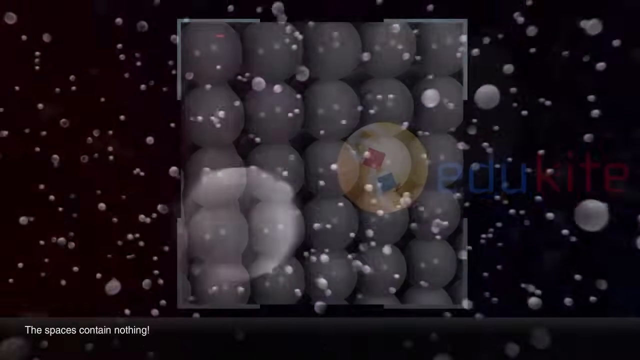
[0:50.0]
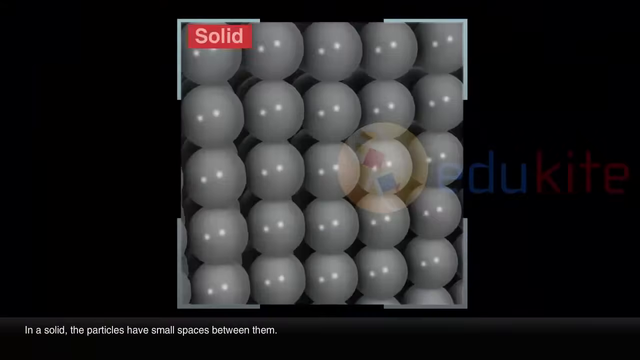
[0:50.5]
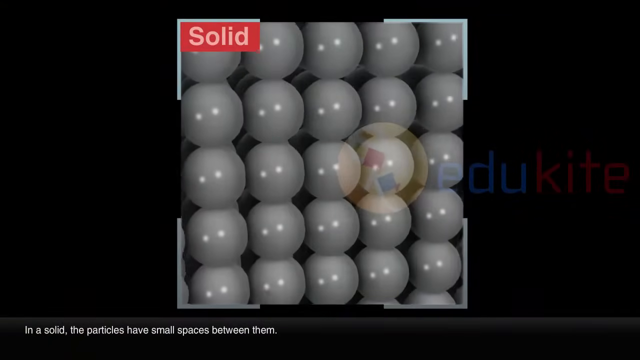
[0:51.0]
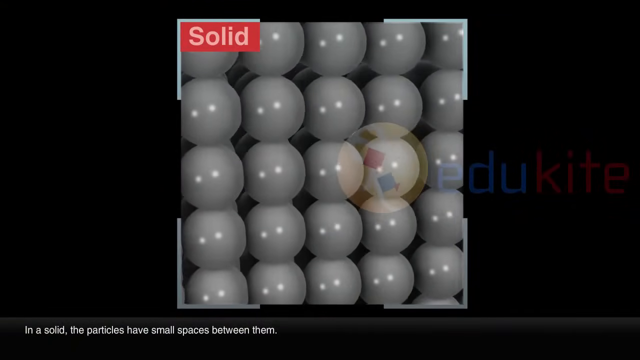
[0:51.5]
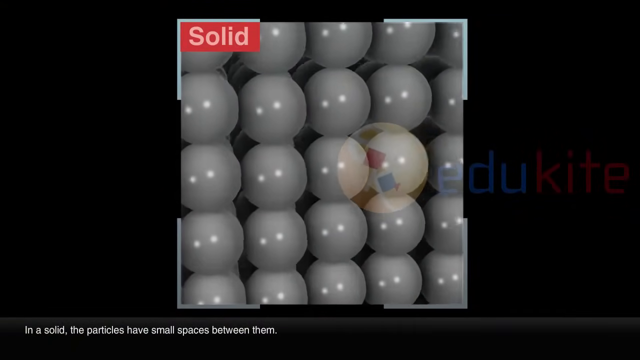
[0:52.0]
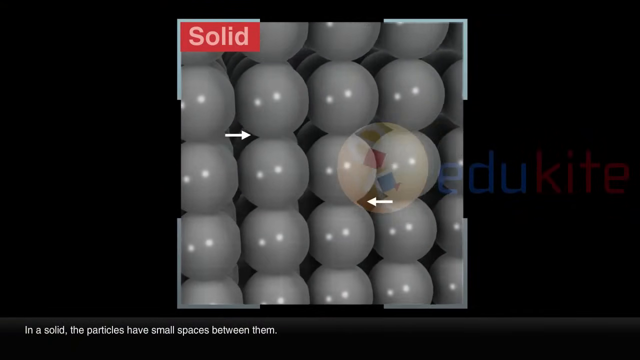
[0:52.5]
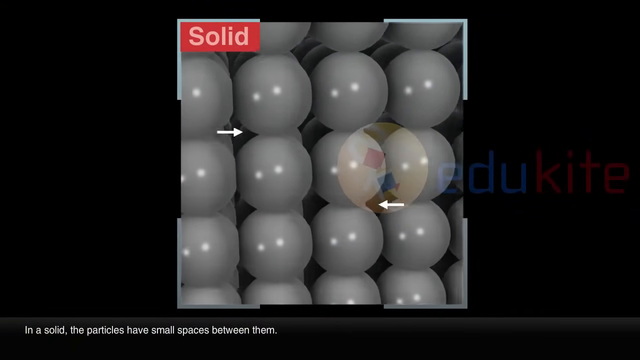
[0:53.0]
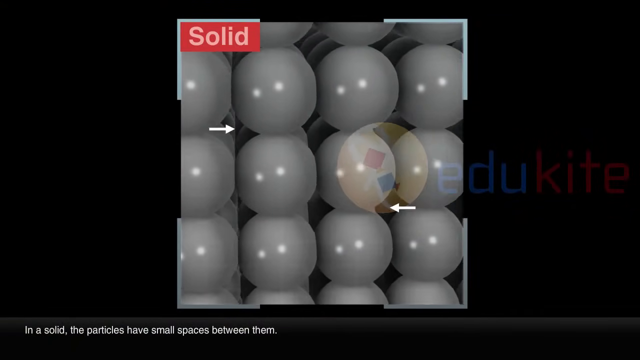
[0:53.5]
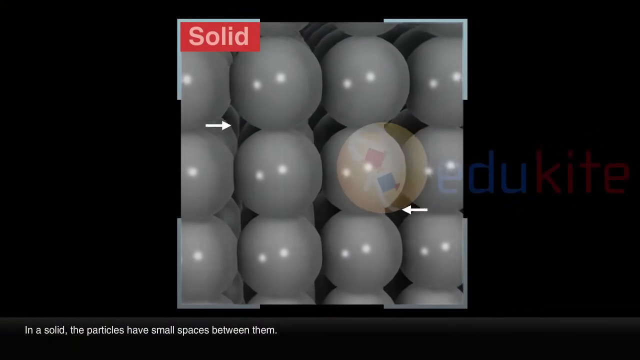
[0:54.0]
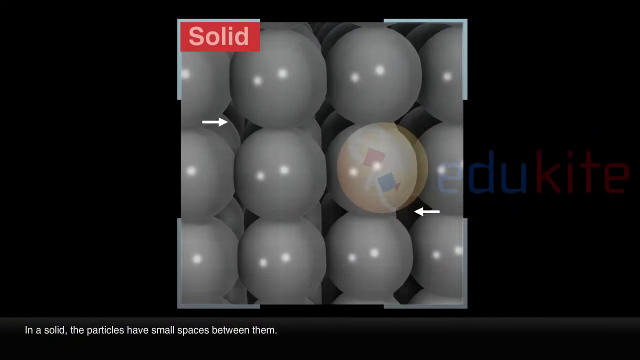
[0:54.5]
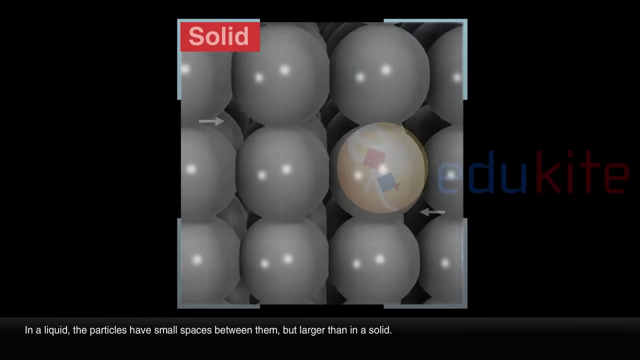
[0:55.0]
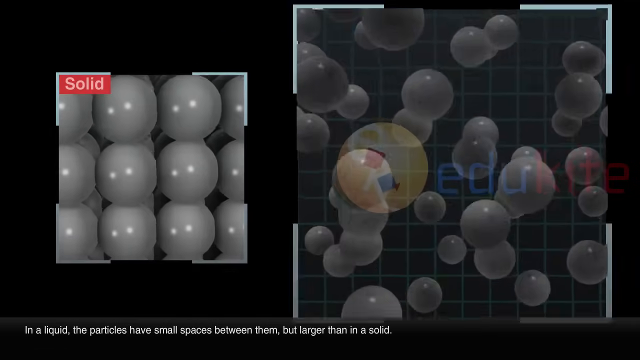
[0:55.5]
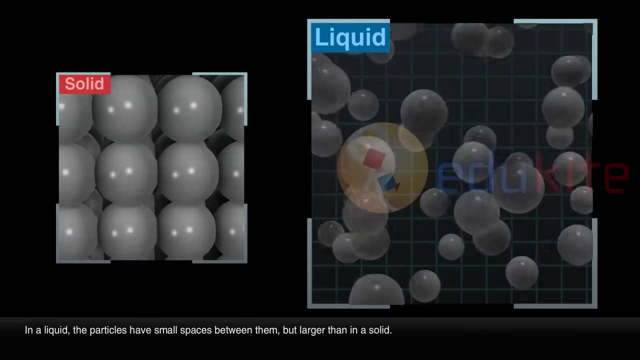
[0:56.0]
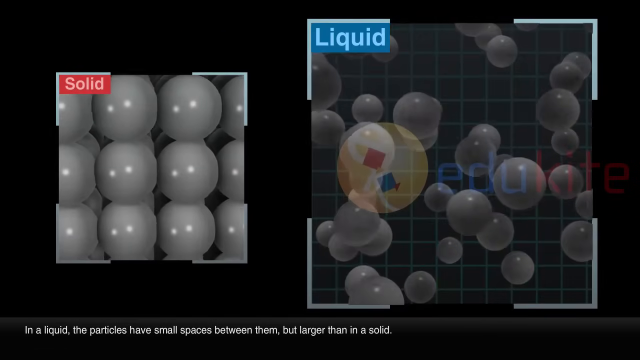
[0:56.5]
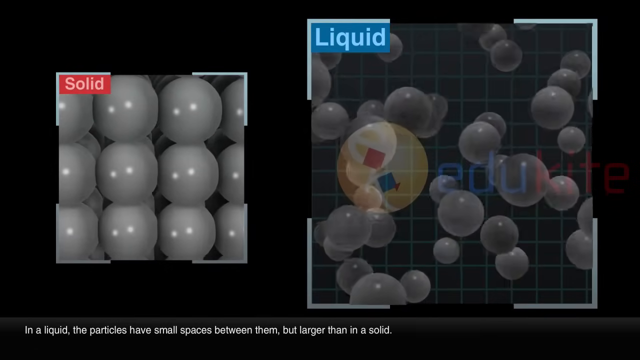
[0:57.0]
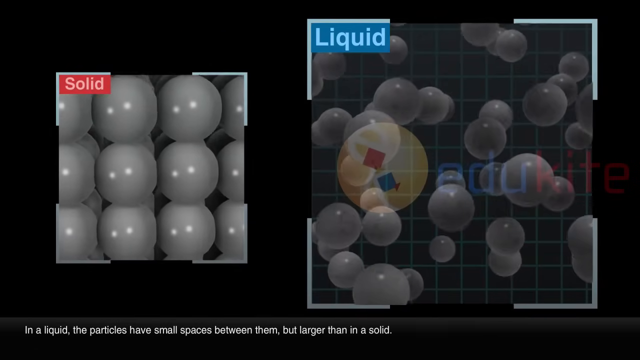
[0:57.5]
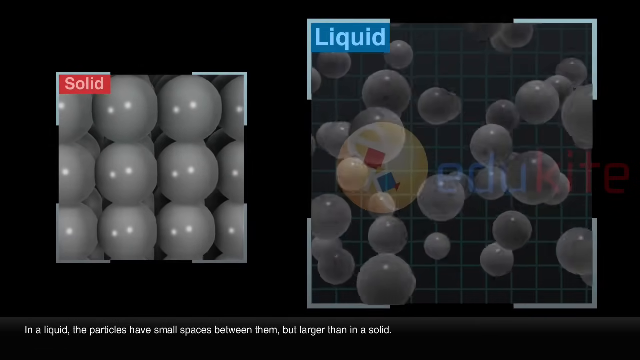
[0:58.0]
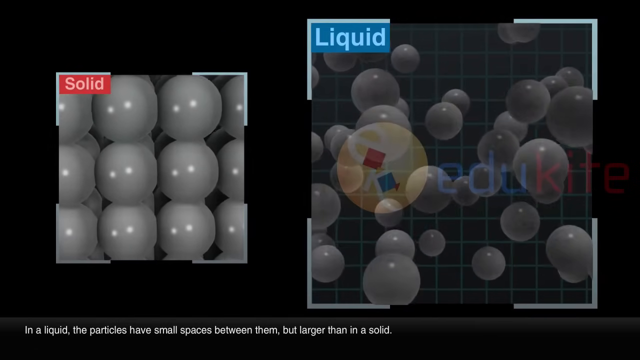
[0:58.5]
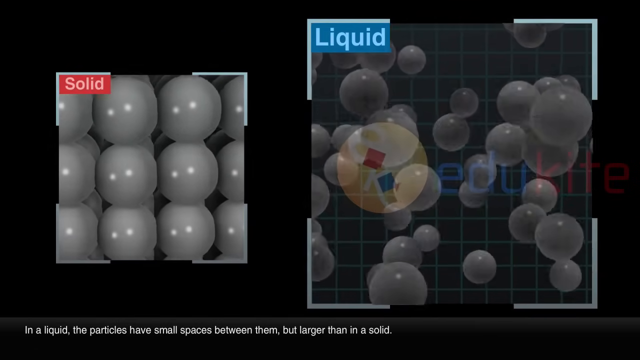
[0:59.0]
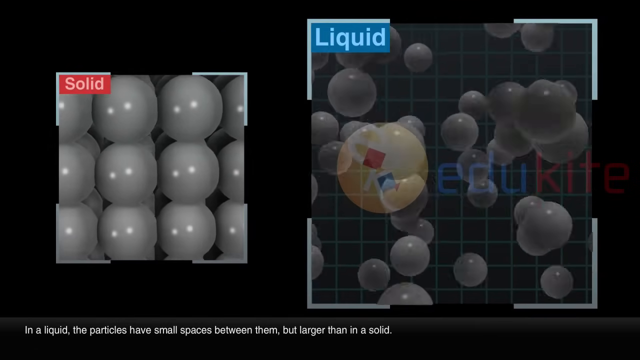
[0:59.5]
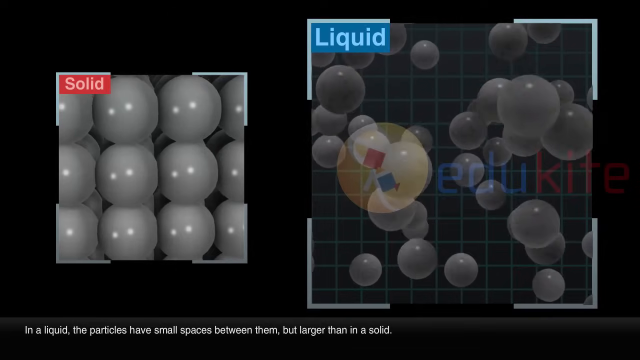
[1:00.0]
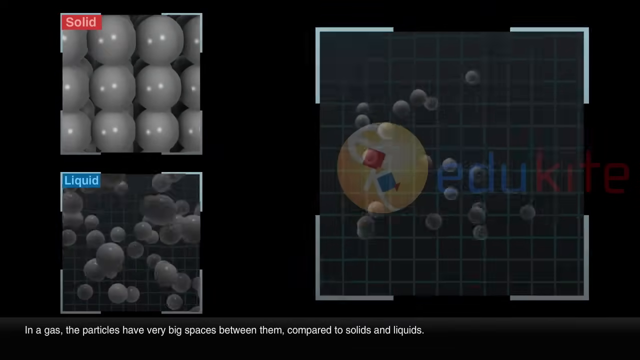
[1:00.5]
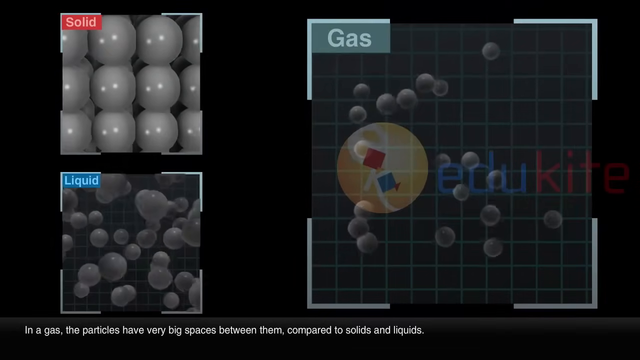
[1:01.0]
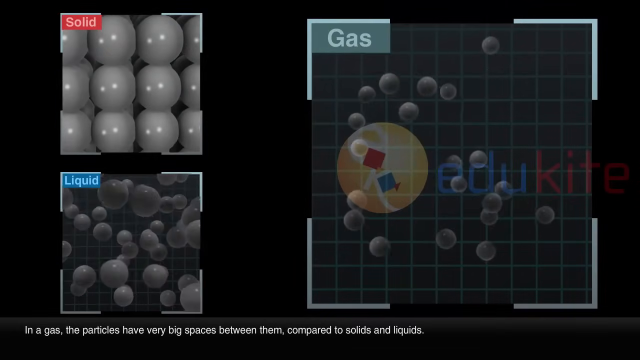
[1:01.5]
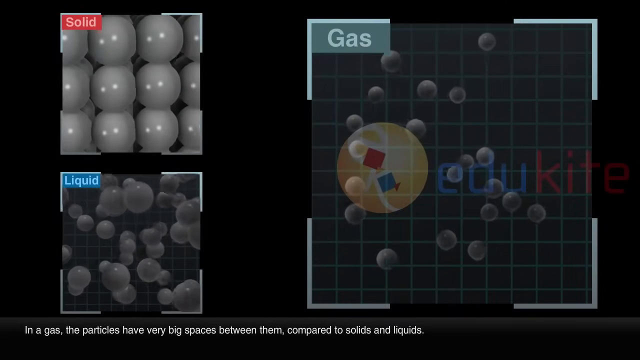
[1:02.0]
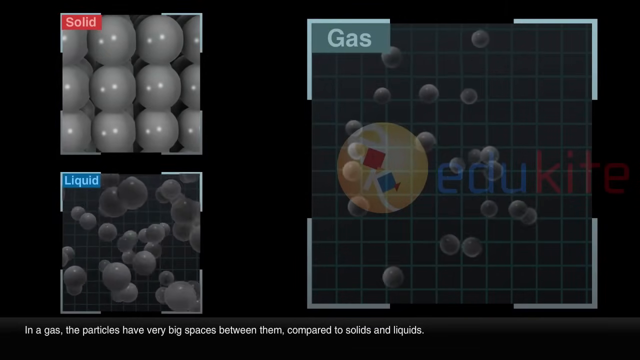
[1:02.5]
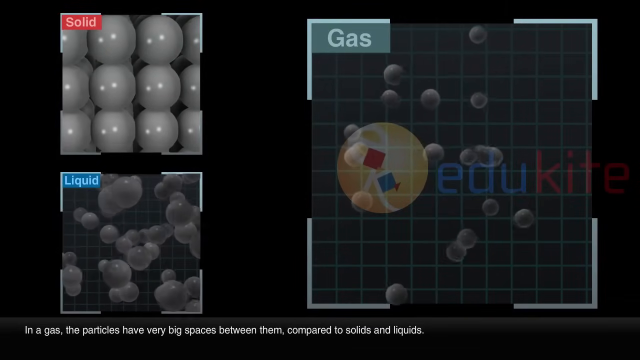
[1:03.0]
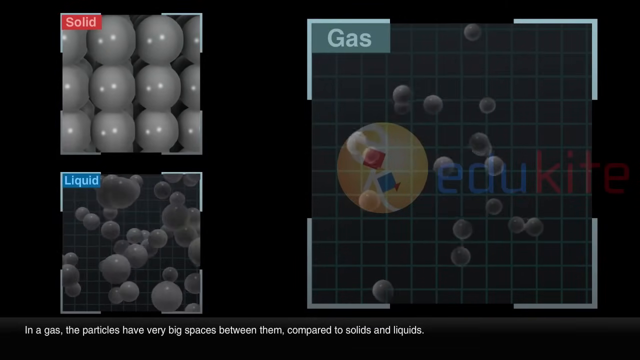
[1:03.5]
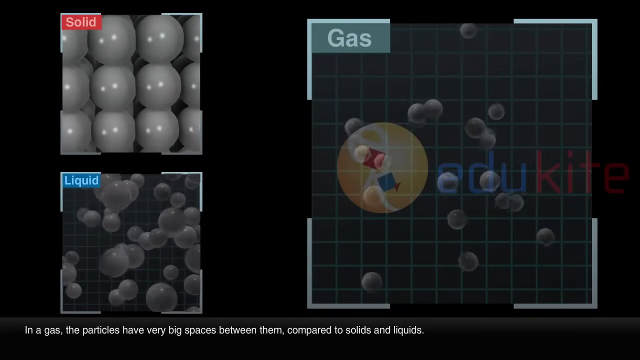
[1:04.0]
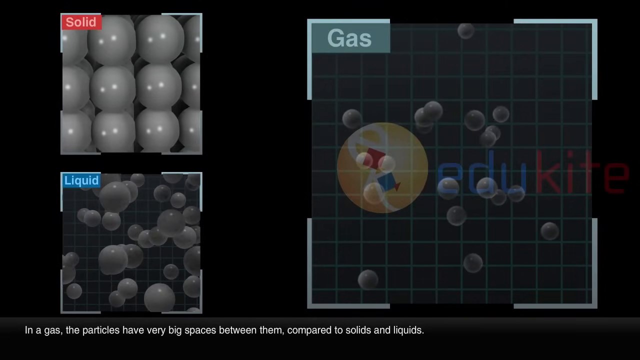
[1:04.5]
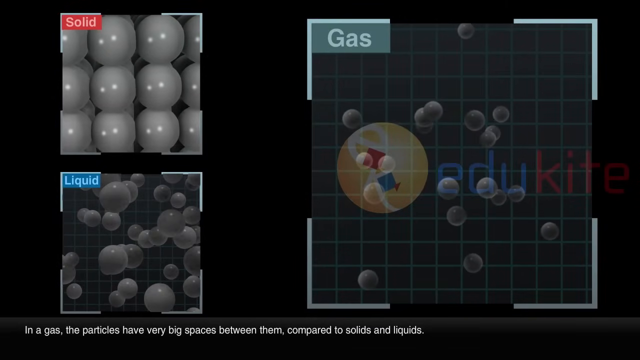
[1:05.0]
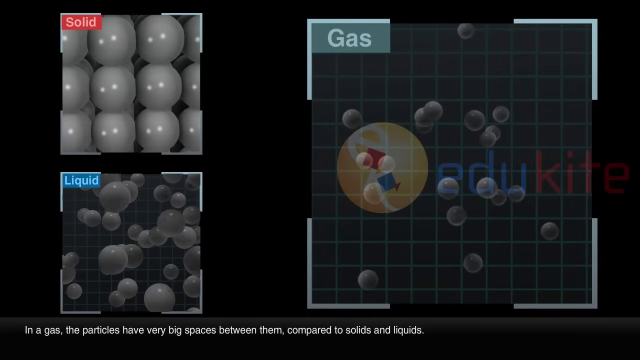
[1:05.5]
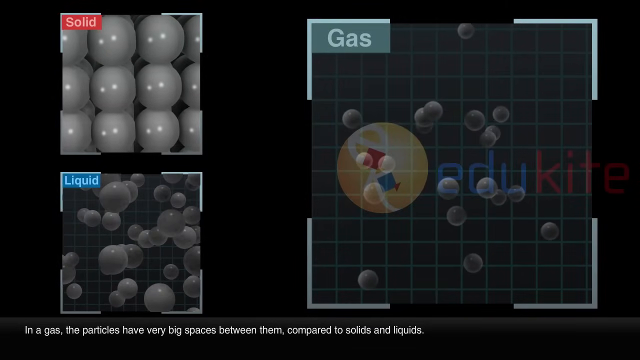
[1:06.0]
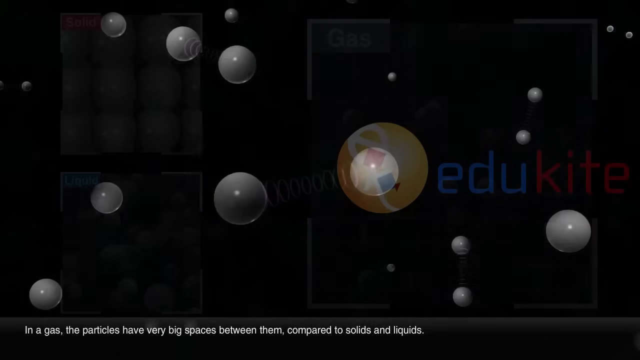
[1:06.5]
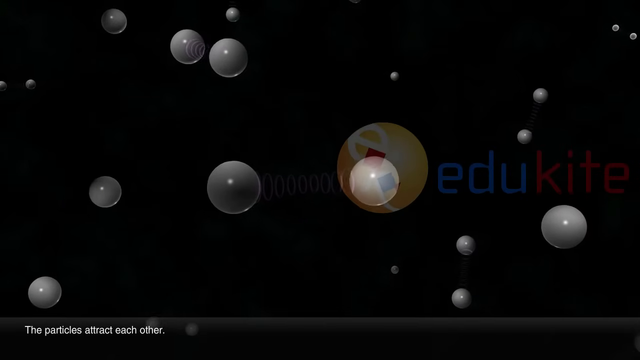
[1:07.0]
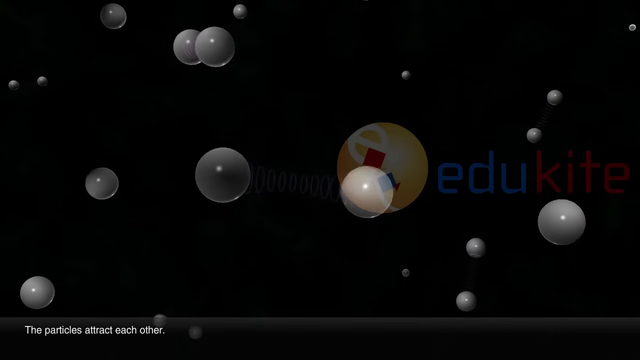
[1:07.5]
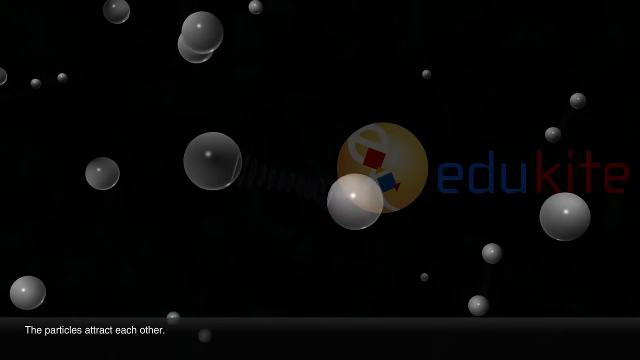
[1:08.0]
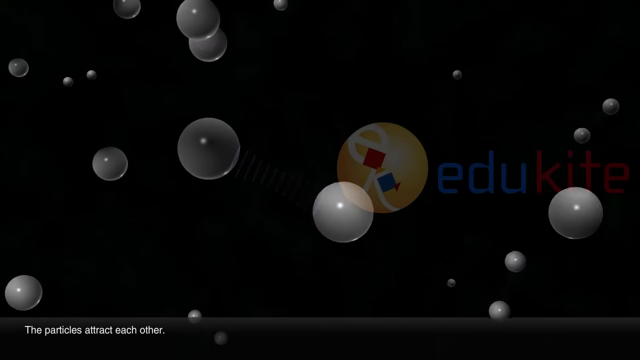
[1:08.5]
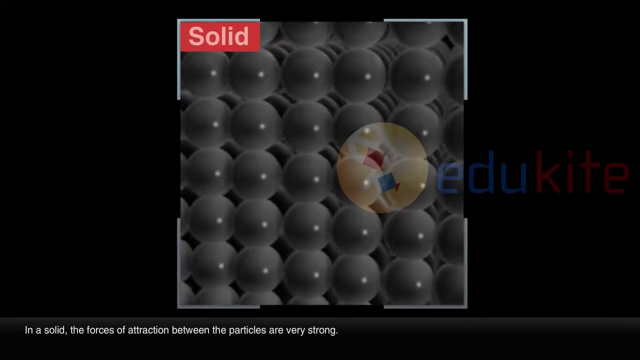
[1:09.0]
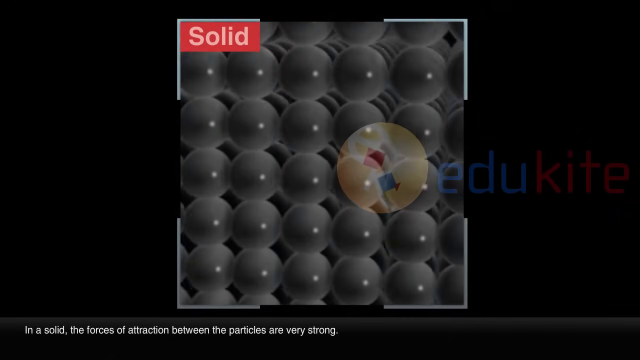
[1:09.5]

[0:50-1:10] On a black background, a square in the middle has the white text "solid" at the top. Throughout the square is what looks like a lattice of spheres packed tightly next to each other. White text at the bottom reads "in a solid, the particles have small spaces between them." The spheres vibrate next to each other in place, and two white arrows point at the top left and bottom right, at the empty space between the spheres. The solid square slides to the left and becomes smaller, and another big square appears on the right with "liquid" in a blue rectangle at its top left. The text at the bottom reads "in a liquid, the particles have small spaces between them, but larger than in a solid." There appear to be many gray spheres, around 20 to 30, all spaced out, bouncing and floating around freely. The liquid square moves down to the bottom left corner and the solid square up to the top left corner, and another big square appears on the right with "gas" in a pale green rectangle at its top left. White text at the bottom reads "in a gas, the particles have very big spaces between them compared to solids and liquids." Around 10 spheres float very freely with a lot of space between them, bouncing around. The video then transitions to another black screen with around 10 to 20 white or gray spheres floating around. White text at the bottom reads "the particles attract each other," and two spheres rotate around each other clockwise, with what looks like little white circles between them, seemingly indicating attraction. The video then returns to the square showing the solid lattice of vibrating spheres, with text at the bottom reading "in a solid, the forces of attraction between the particles are very strong," and the spheres glow blue.